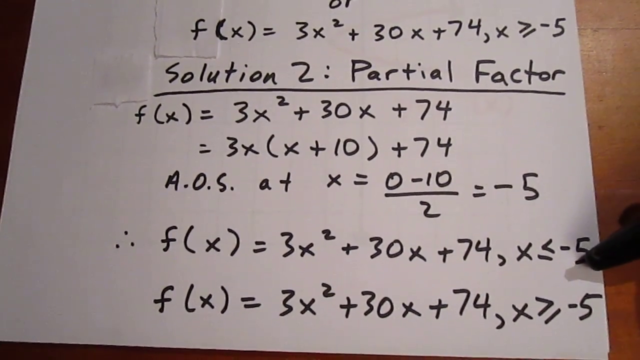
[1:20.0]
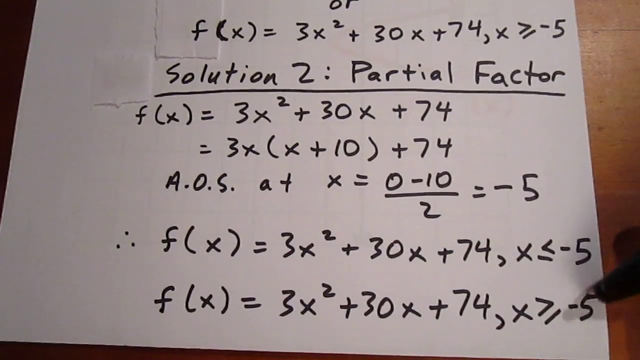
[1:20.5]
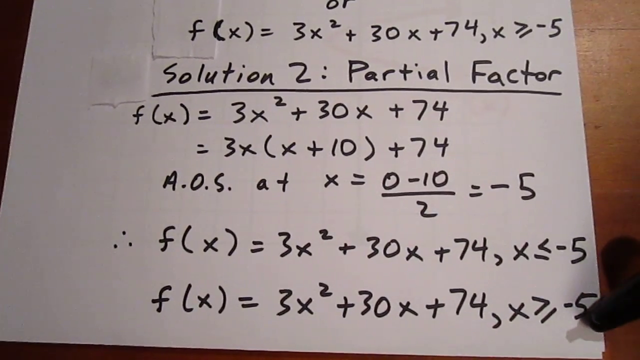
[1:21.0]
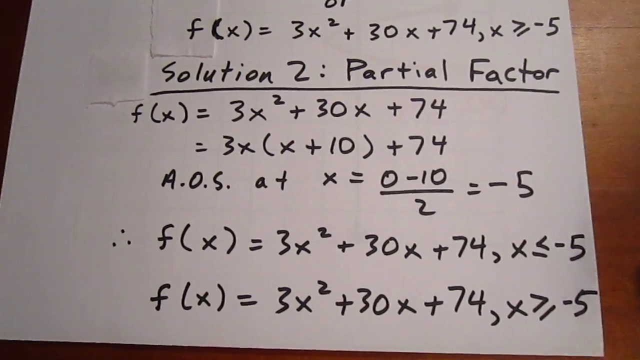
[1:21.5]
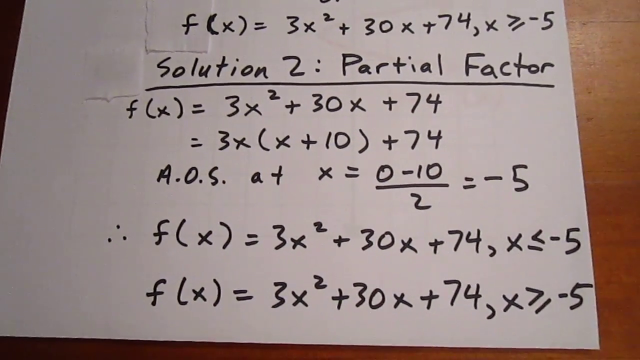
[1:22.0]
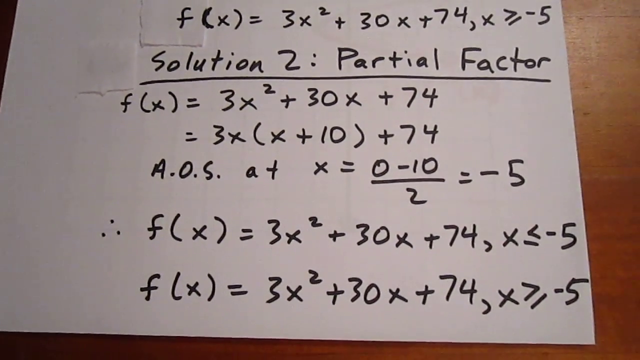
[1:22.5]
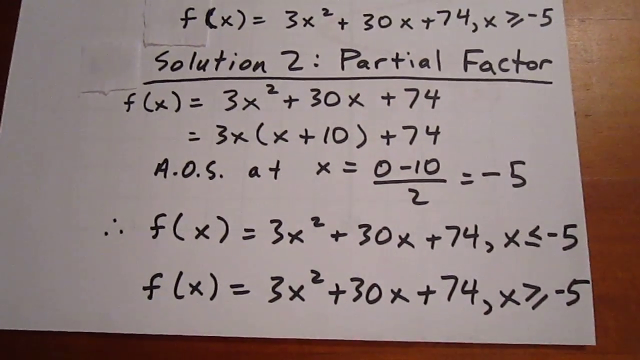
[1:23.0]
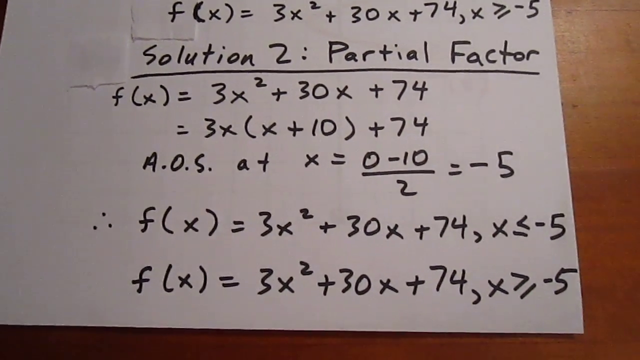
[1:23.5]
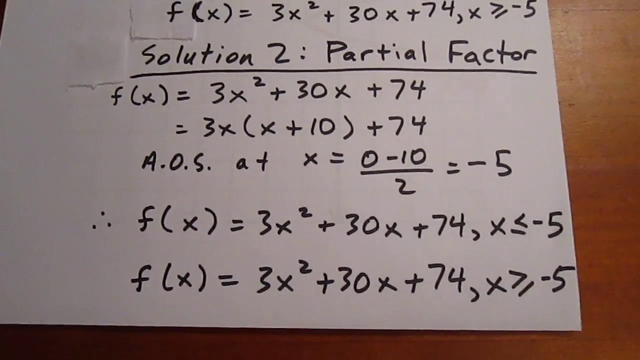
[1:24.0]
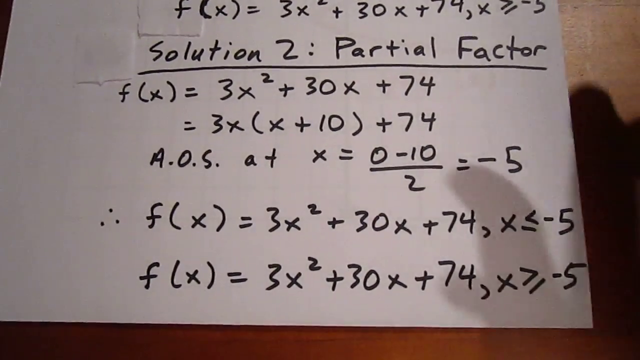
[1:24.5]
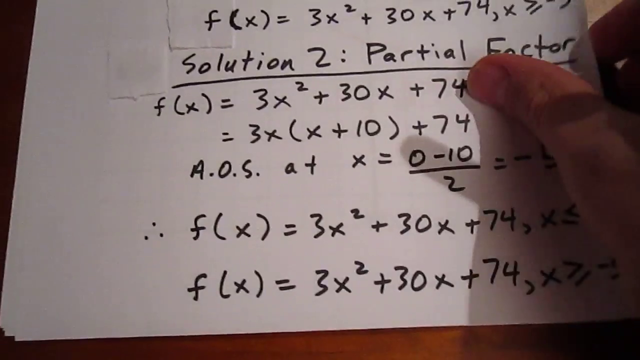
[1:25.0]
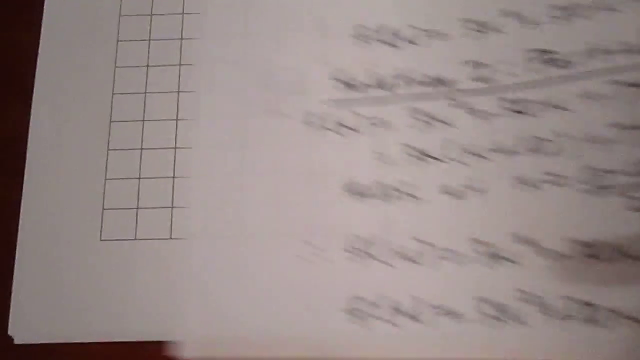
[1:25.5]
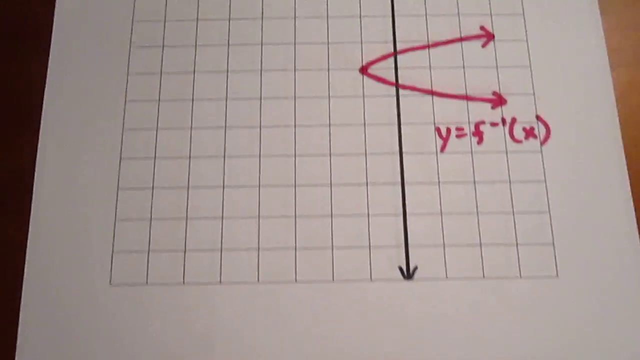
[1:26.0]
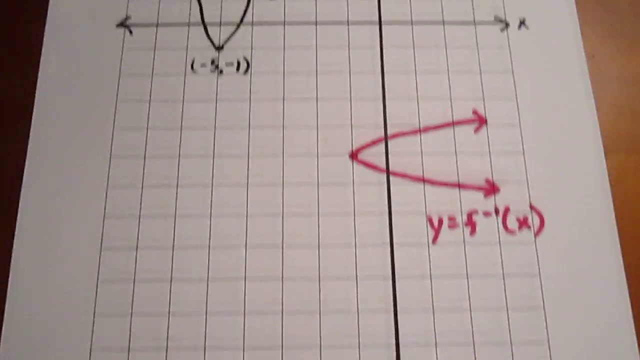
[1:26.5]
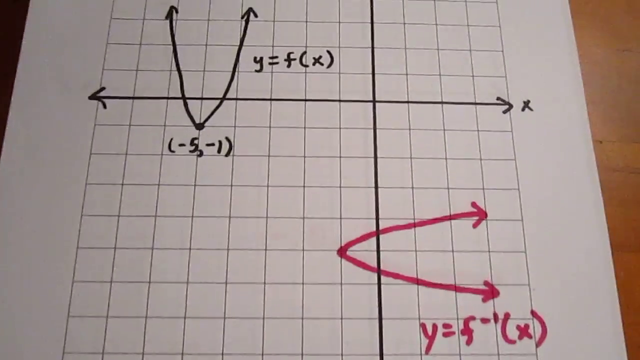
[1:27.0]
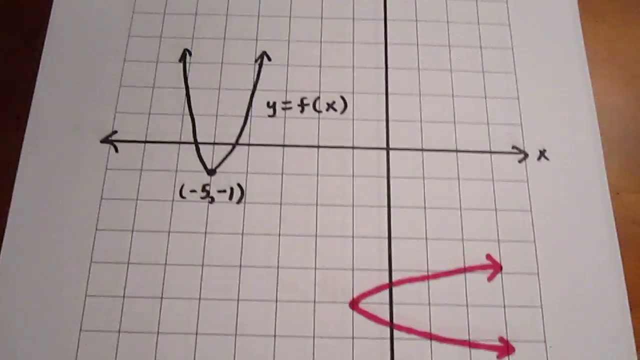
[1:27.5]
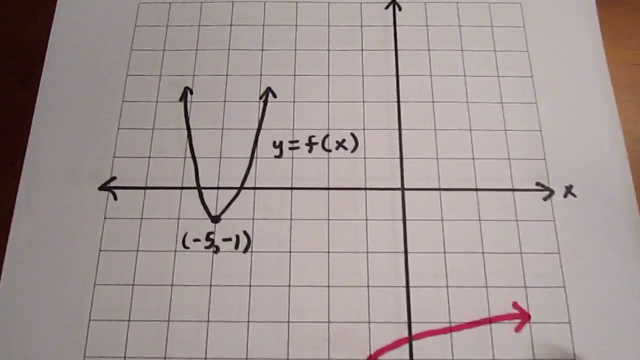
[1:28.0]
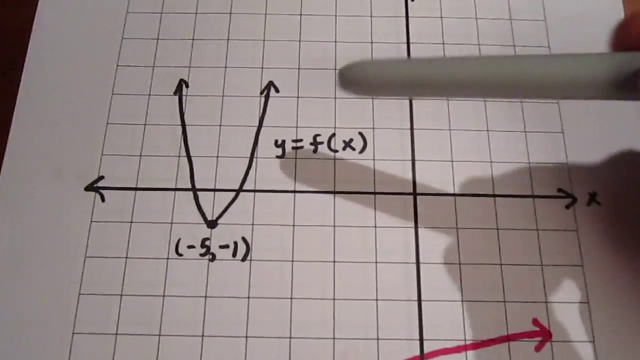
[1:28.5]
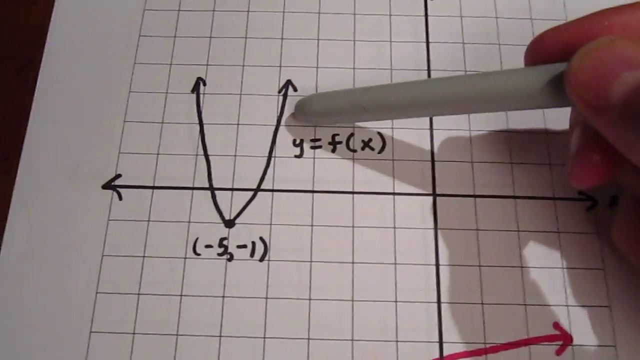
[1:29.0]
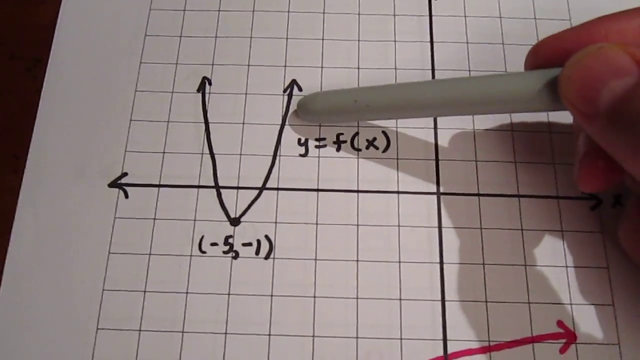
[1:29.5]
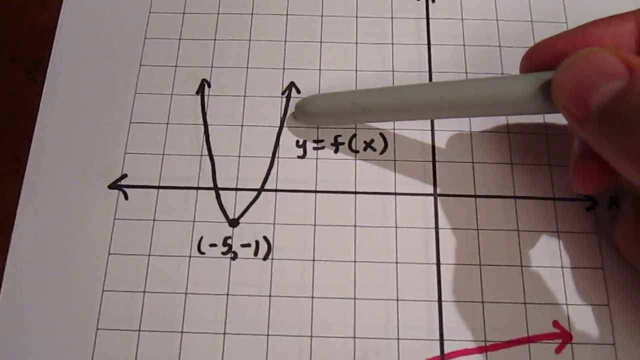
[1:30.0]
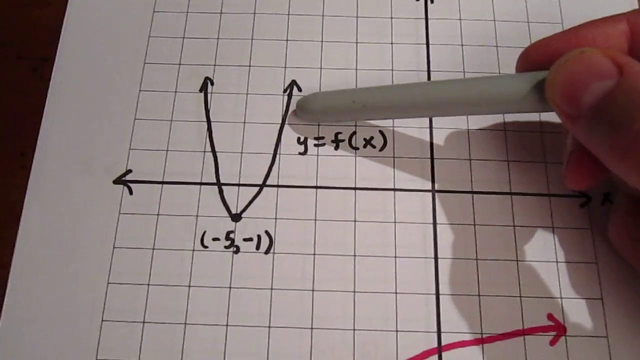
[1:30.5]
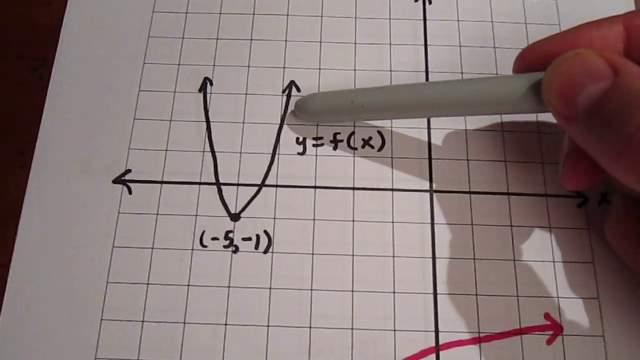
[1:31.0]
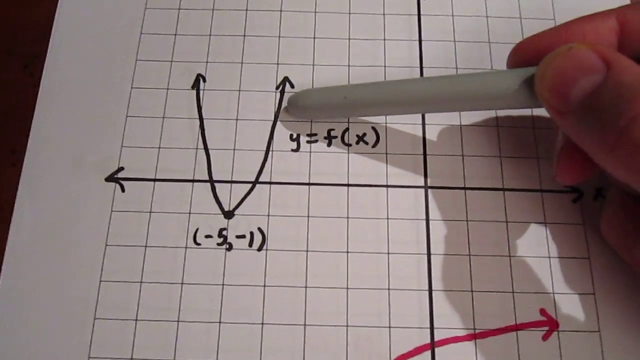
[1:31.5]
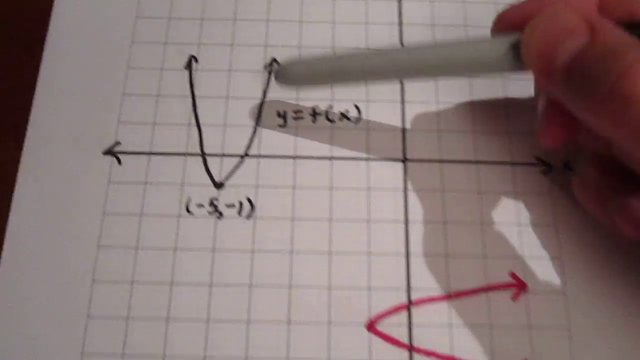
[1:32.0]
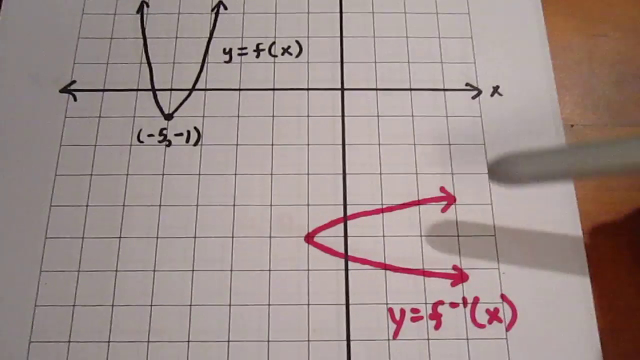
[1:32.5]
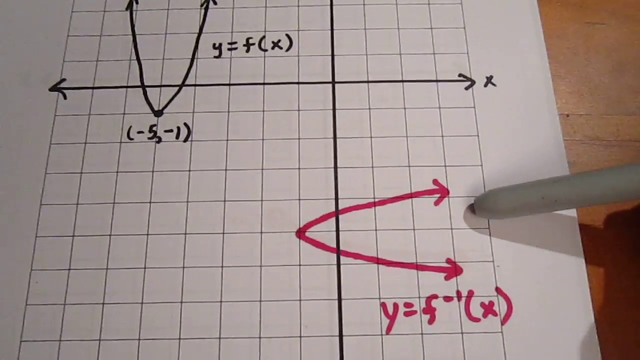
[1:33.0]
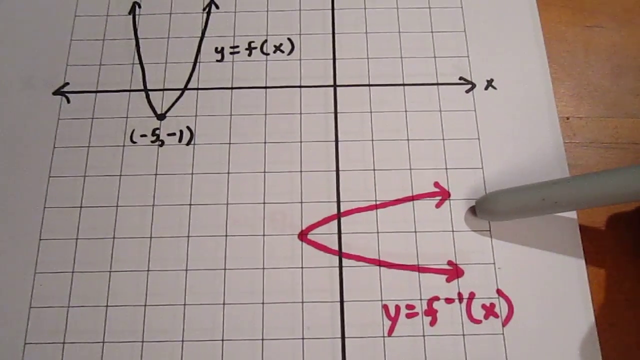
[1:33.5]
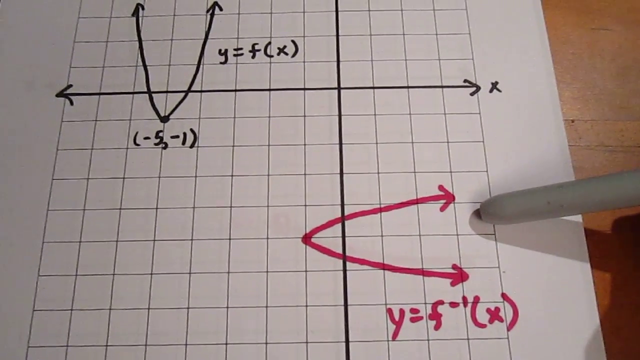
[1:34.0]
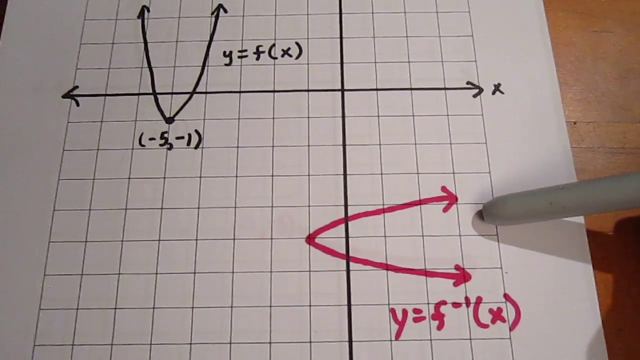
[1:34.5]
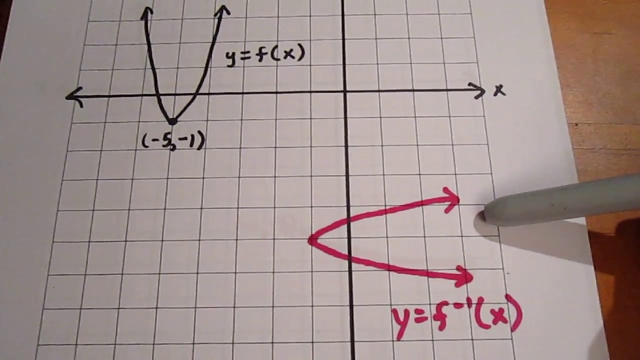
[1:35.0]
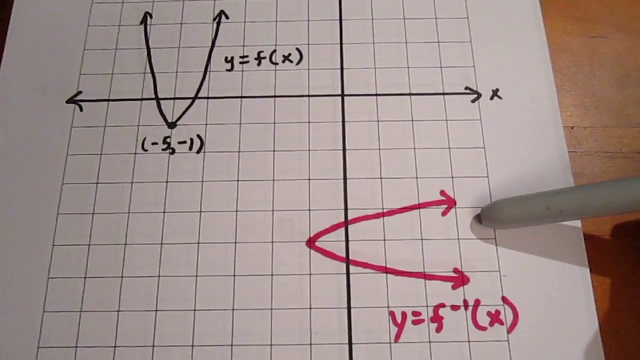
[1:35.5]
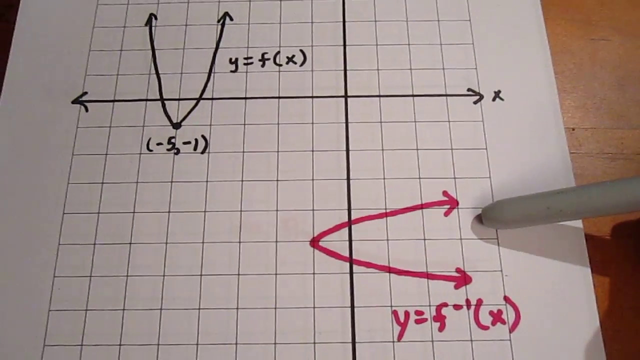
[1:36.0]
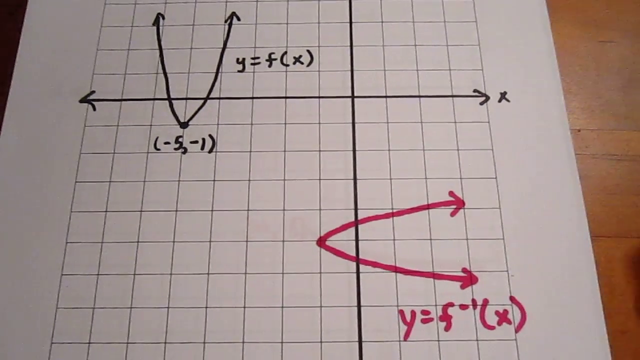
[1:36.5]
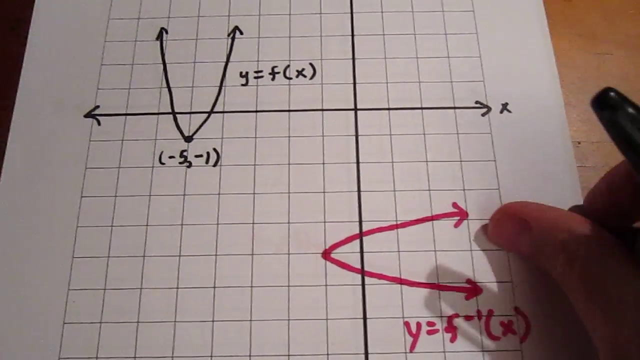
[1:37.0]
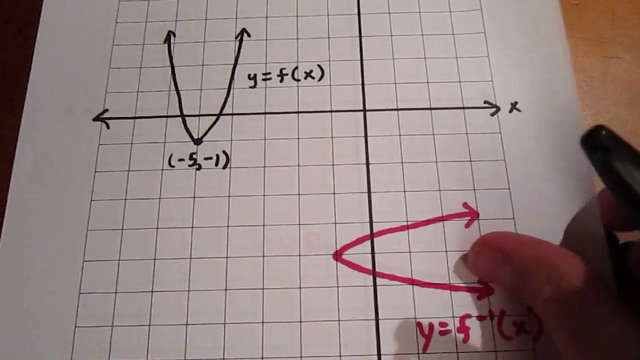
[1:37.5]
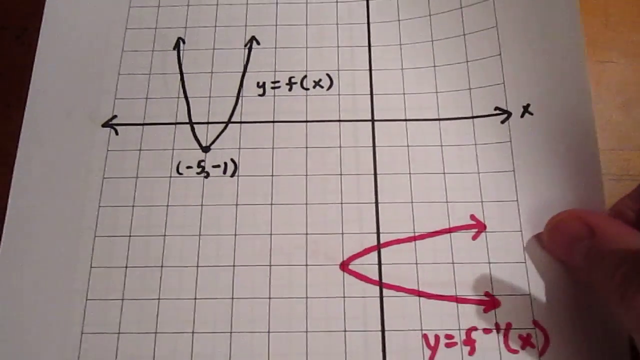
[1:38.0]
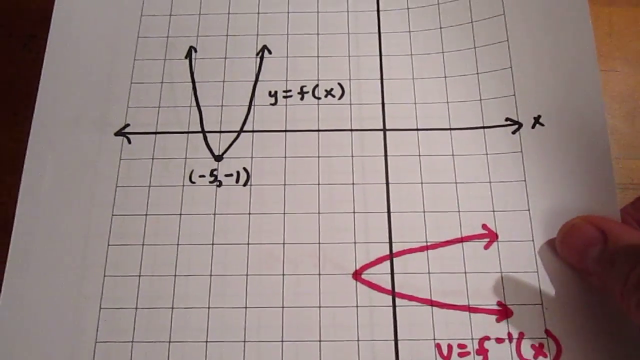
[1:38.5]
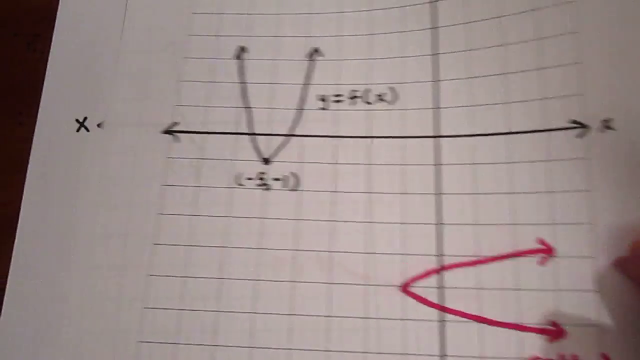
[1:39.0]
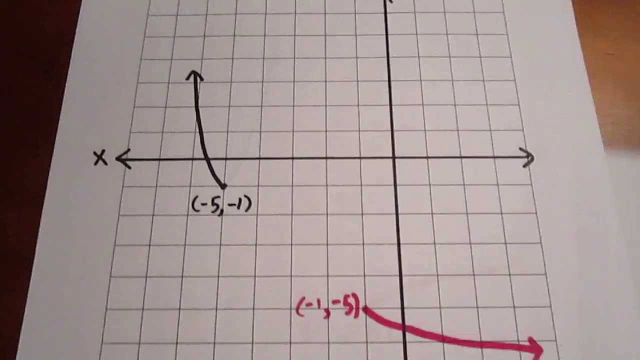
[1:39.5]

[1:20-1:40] The page is removed, revealing a graph on Cartesian coordinates: a piece of graph paper with fairly large squares, with the x-axis drawn in black Sharpie marker and the vertical y-axis in the same black Sharpie marker. The graph of two functions is shown. One function, labelled y = f(x), starts from what is apparently its vertex at the point where x is −5 and y is −1. Another function, written in red, starts from the point where x is −1 and y is −5 and is labelled y = f⁻¹(x), apparently the inverse, a reflection of the first. The sharpie points out the red part. The next page is then turned.